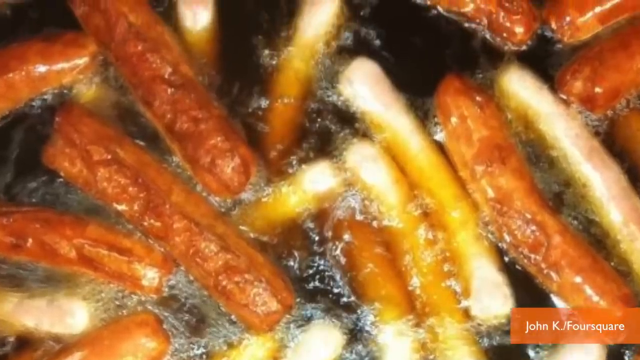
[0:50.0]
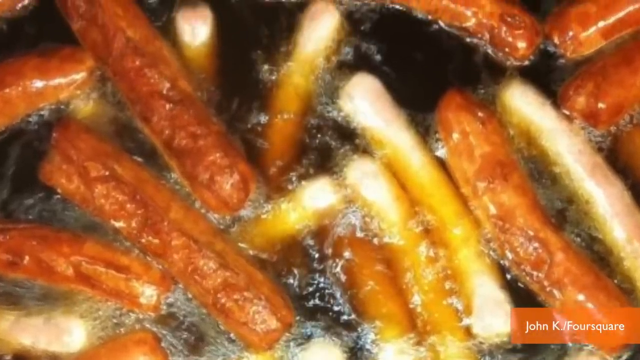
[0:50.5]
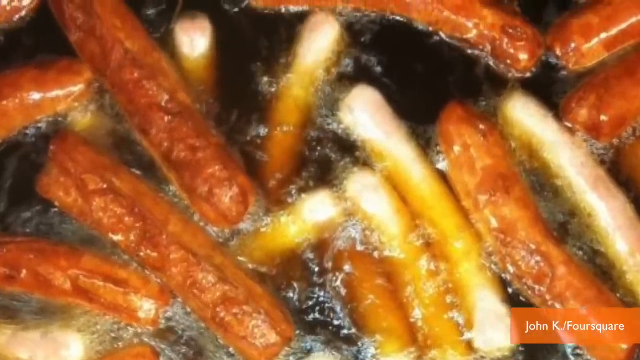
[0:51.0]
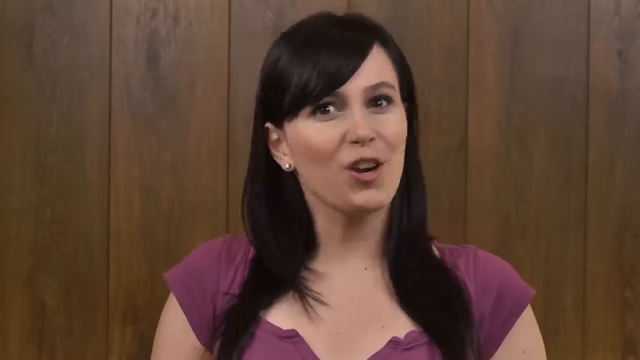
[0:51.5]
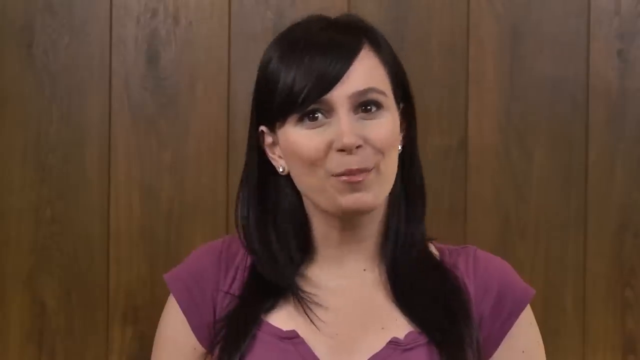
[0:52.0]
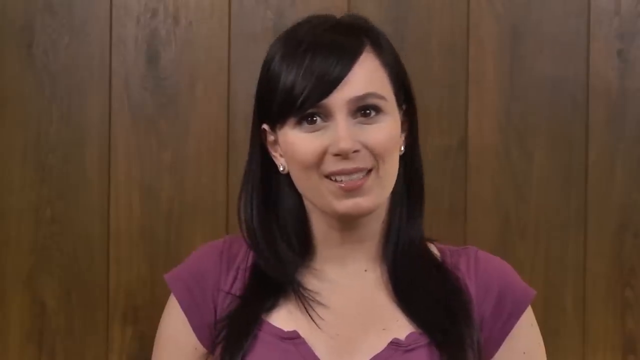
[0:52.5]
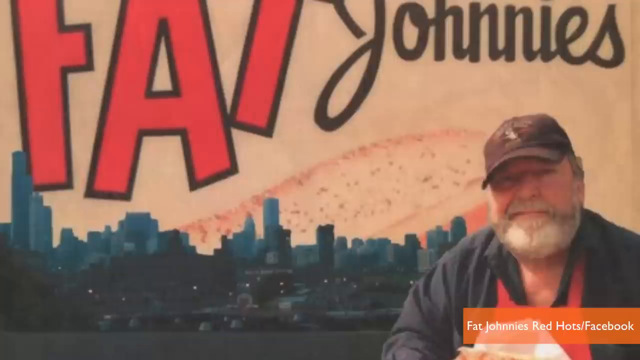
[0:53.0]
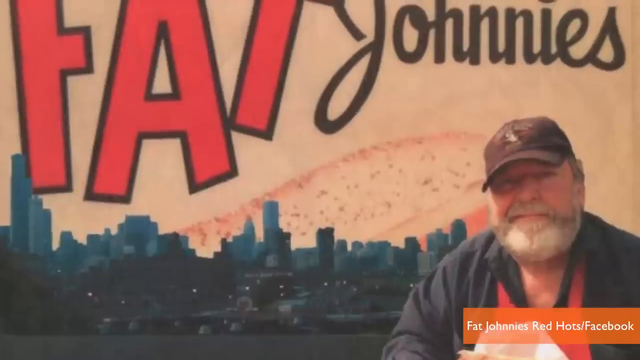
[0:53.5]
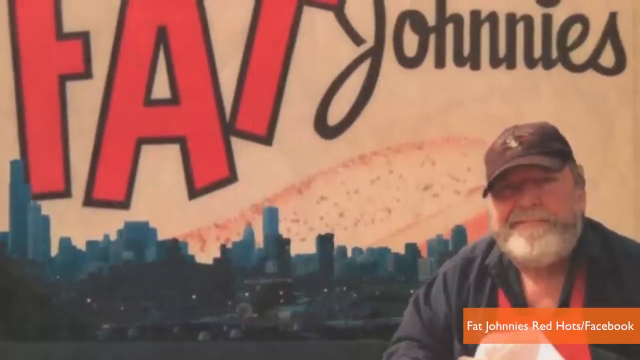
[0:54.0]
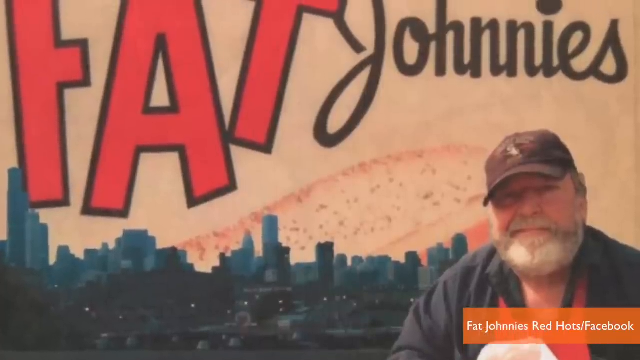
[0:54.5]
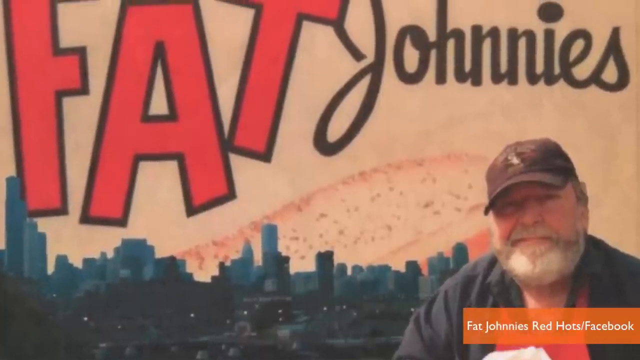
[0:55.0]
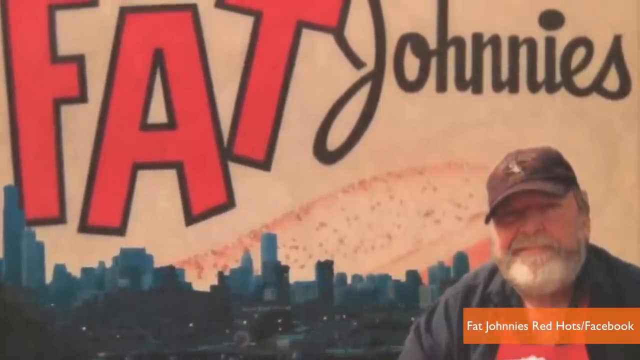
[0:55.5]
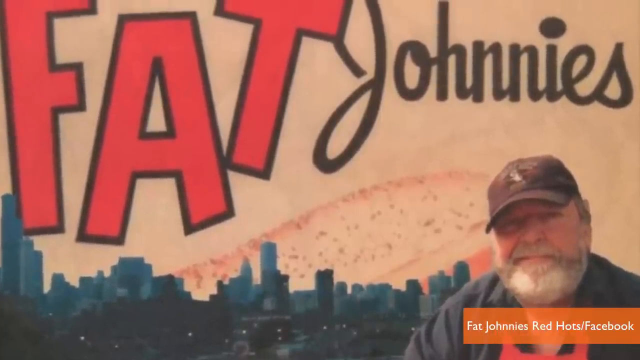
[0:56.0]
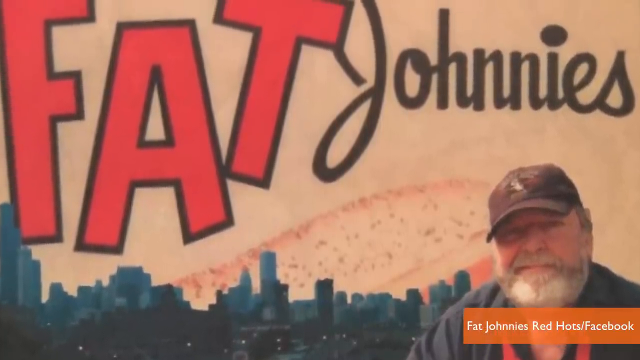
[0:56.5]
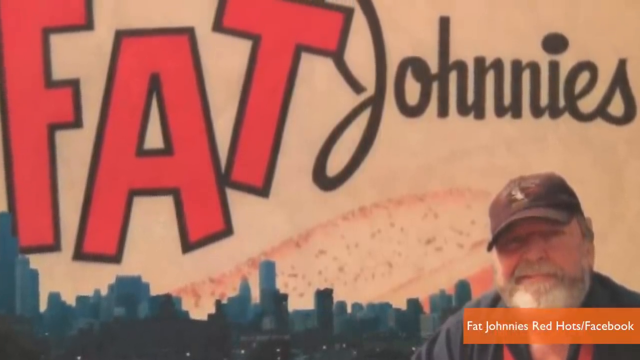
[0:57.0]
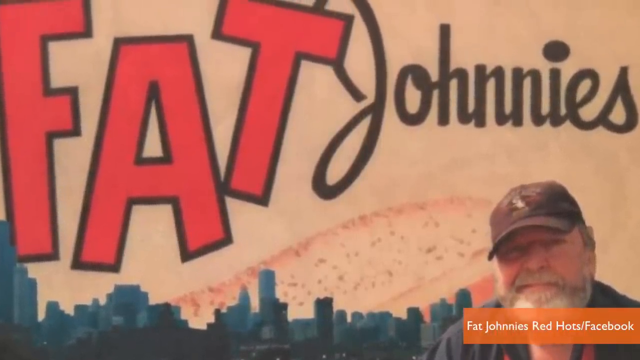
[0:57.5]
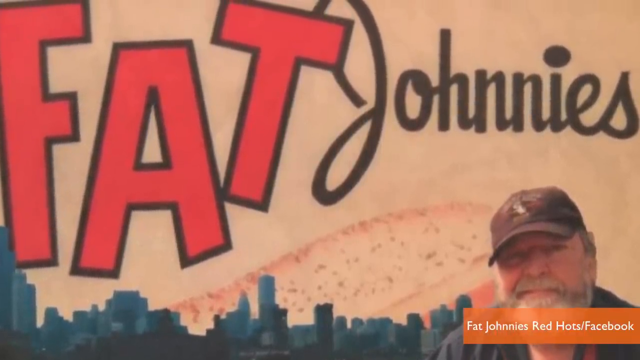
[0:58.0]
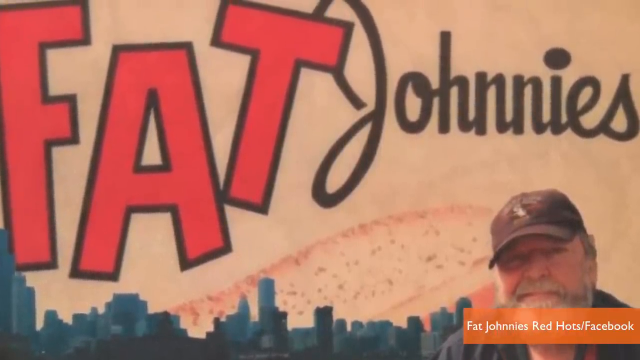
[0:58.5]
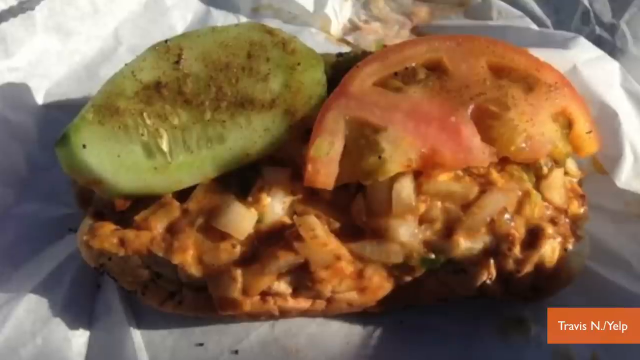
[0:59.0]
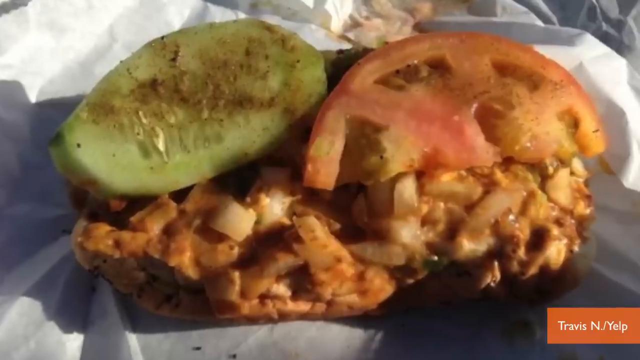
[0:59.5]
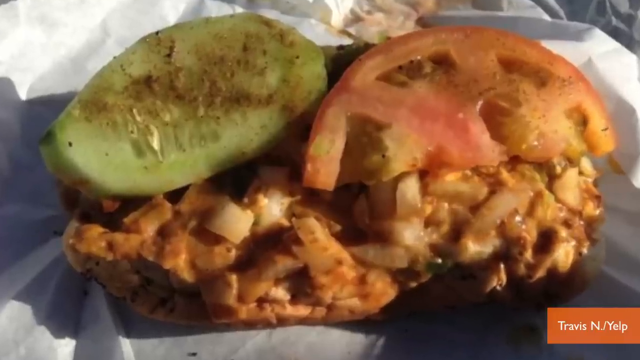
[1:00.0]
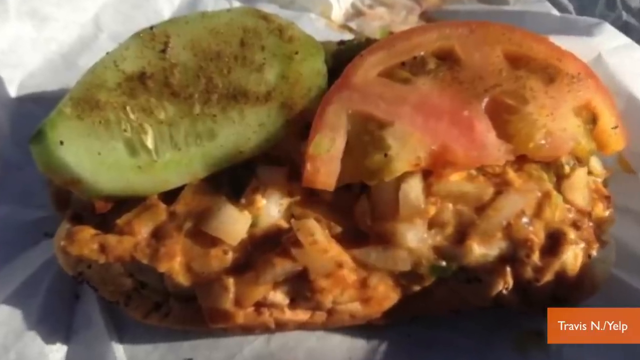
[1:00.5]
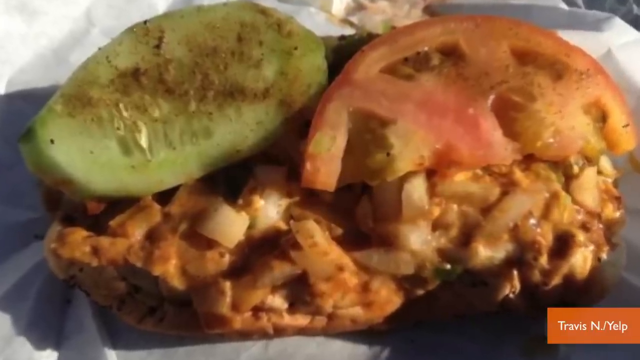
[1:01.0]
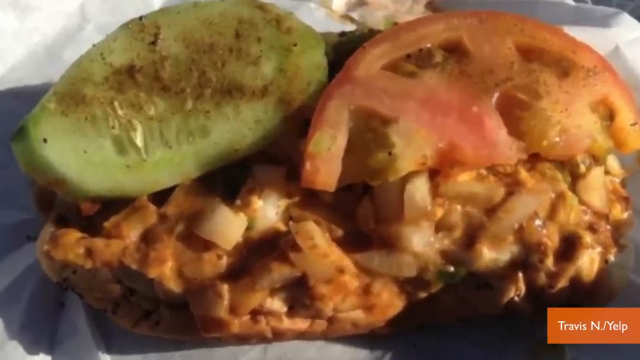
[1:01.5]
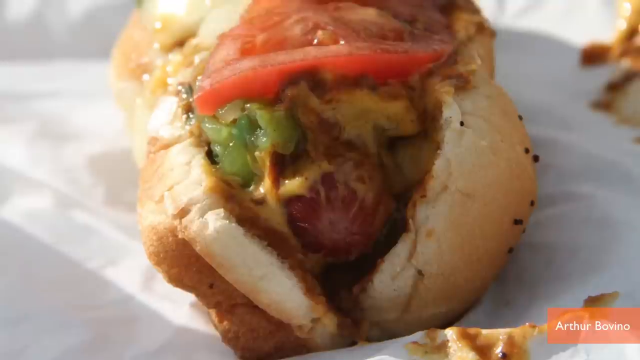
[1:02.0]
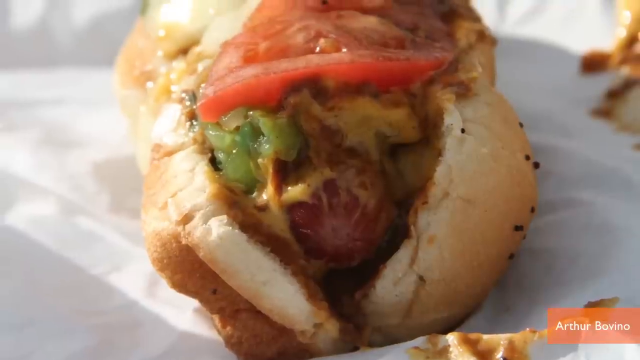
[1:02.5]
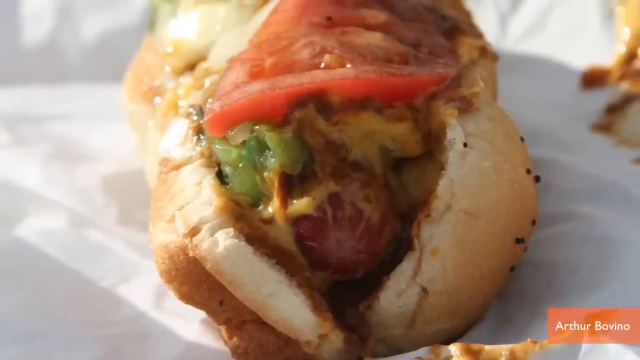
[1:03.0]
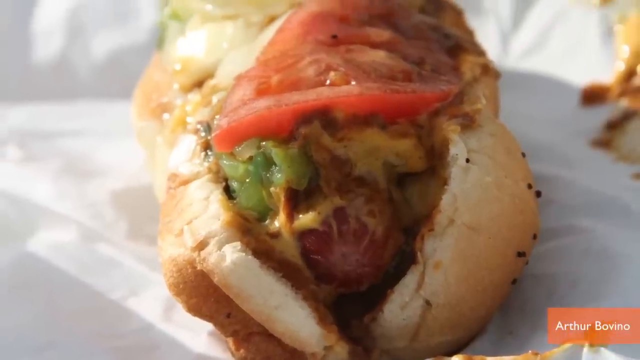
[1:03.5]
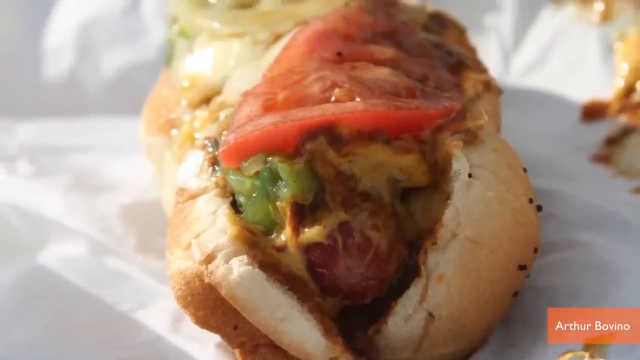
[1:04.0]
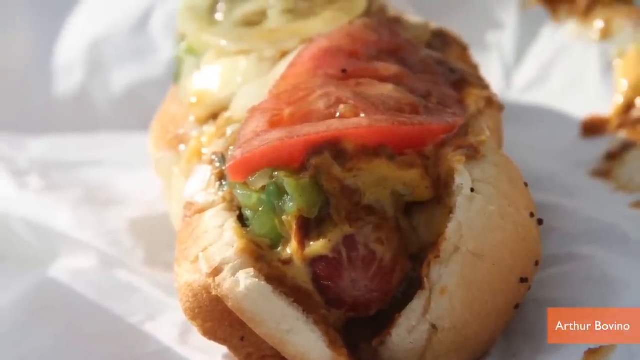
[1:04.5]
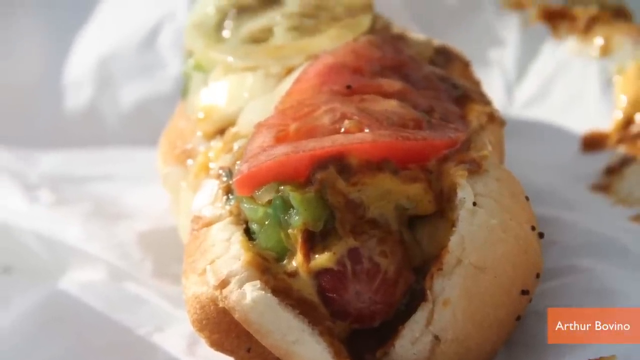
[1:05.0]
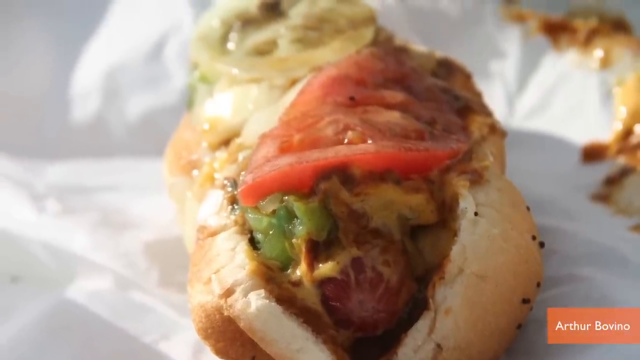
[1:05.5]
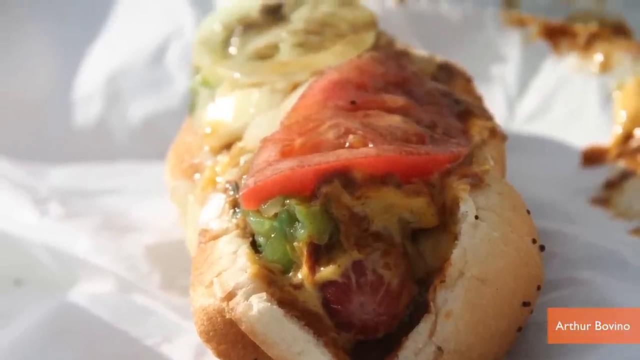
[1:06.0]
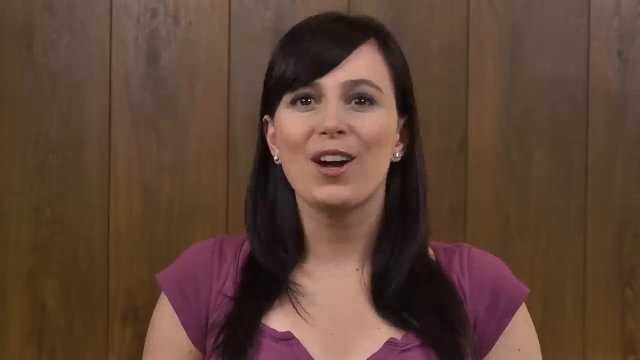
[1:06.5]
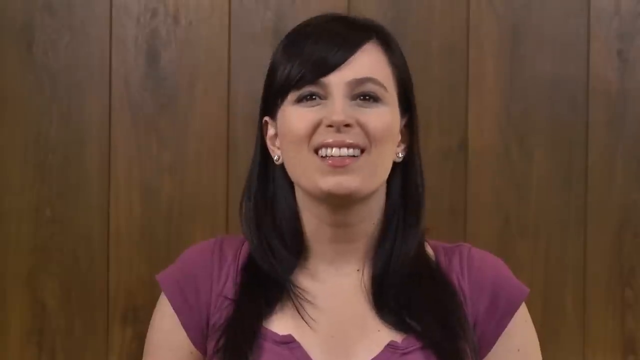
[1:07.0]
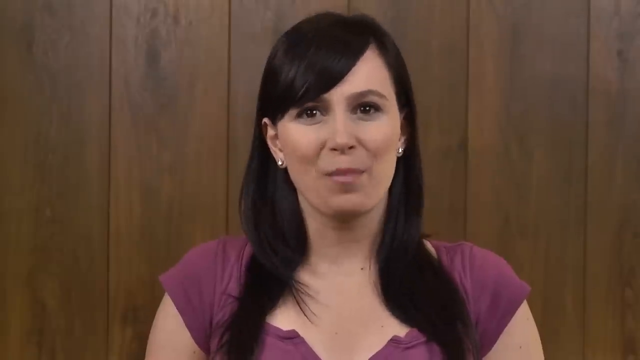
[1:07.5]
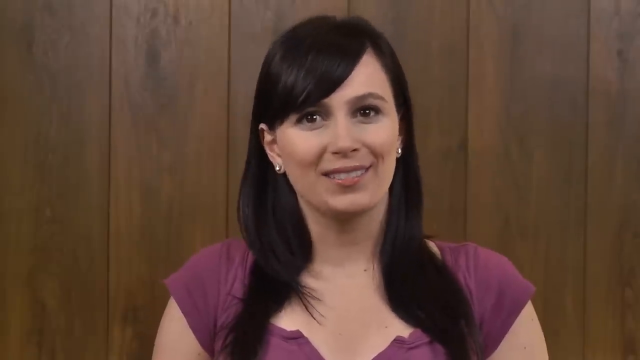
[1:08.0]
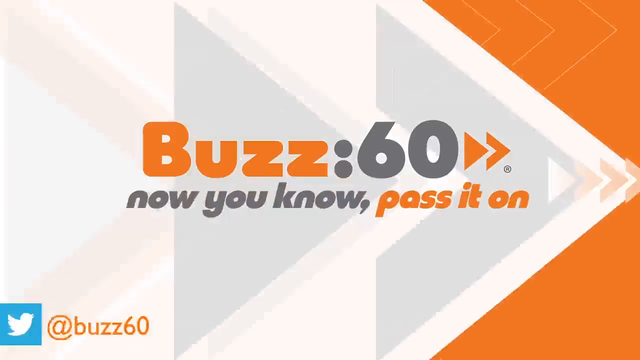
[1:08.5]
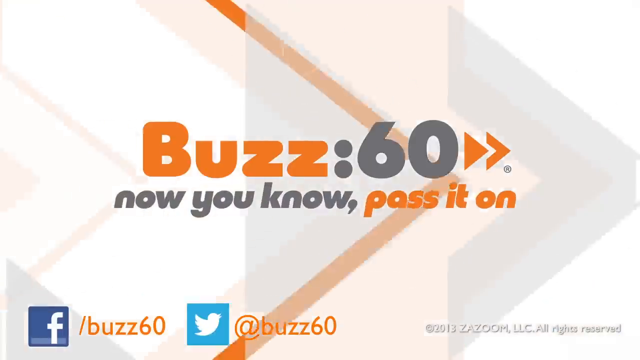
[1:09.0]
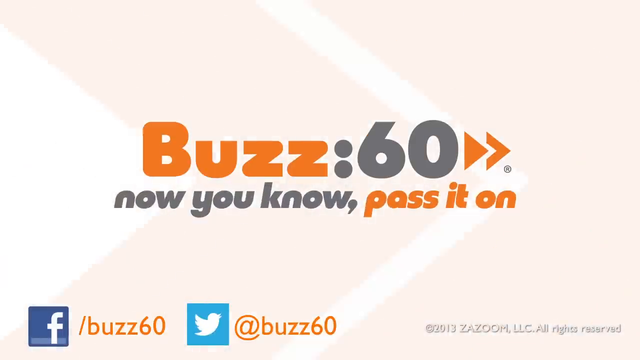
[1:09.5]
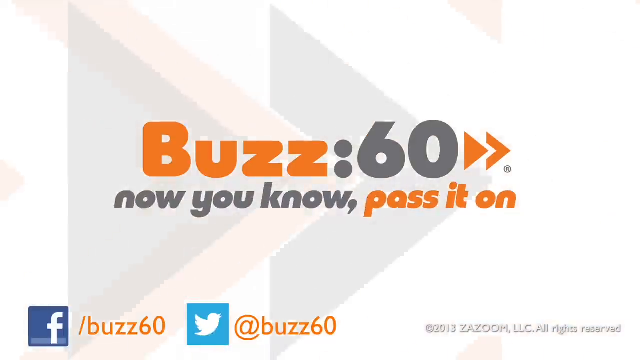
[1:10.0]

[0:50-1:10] A lady is shown, then a guy, then some hot dog food with a hot dog, peas and tomato. Hot dogs are being fried in a lot of cooking oil. A juicy hot dog loaded with cucumber, tomato, cheese and onion looks juicy. The lady talks while shaking her head. A picture with "30 journeys" written on it appears, along with a picture of a city.